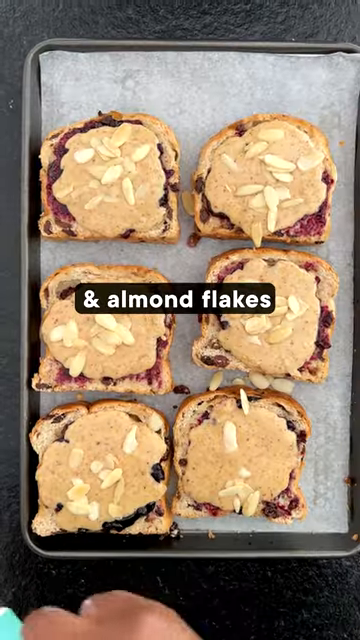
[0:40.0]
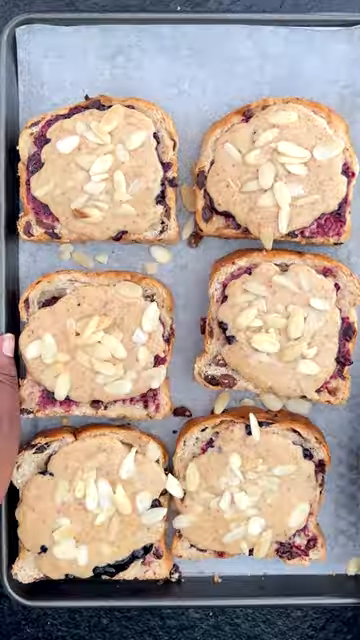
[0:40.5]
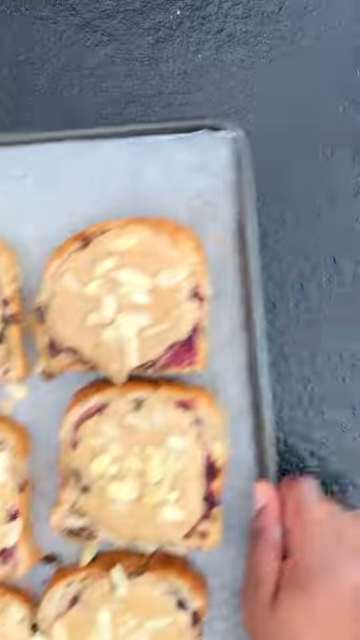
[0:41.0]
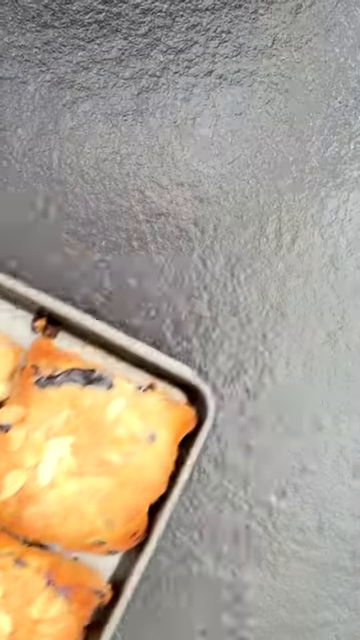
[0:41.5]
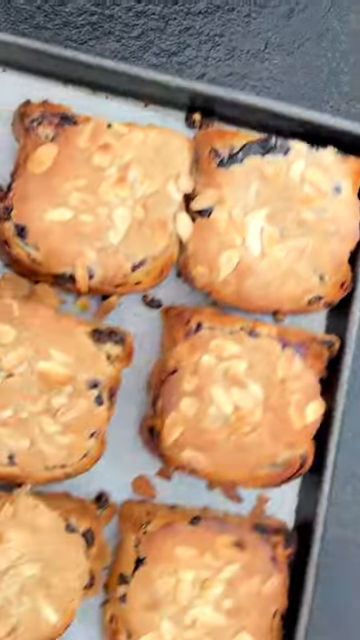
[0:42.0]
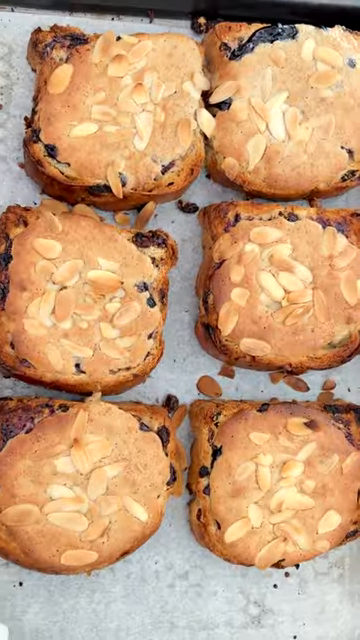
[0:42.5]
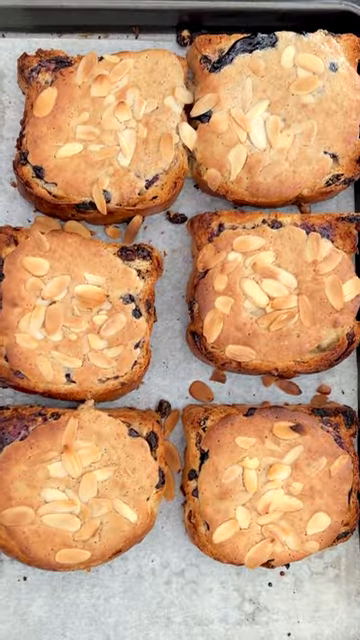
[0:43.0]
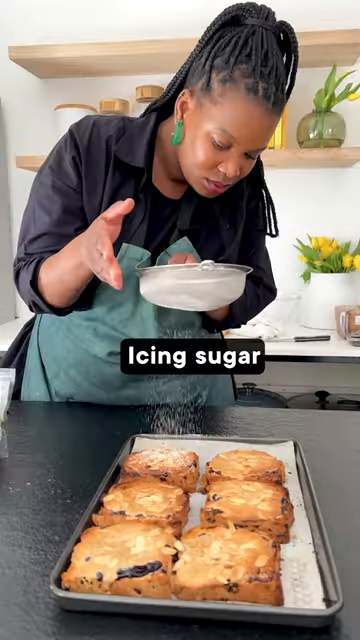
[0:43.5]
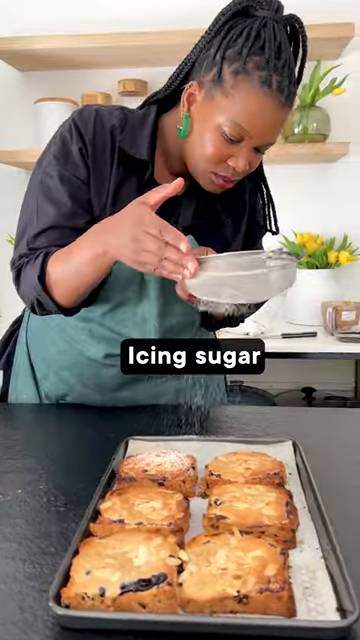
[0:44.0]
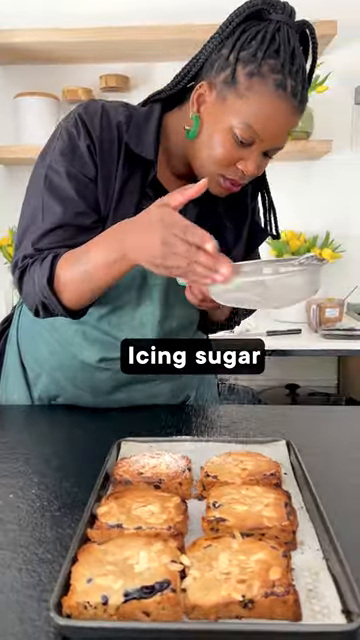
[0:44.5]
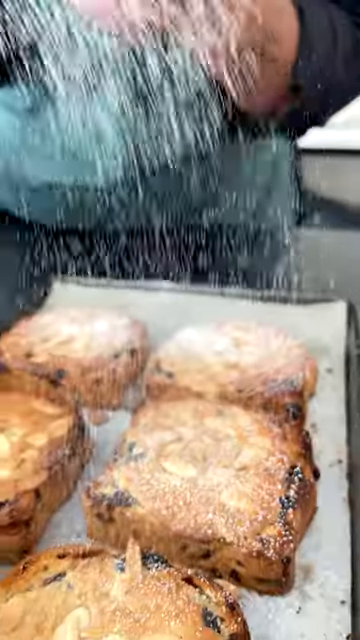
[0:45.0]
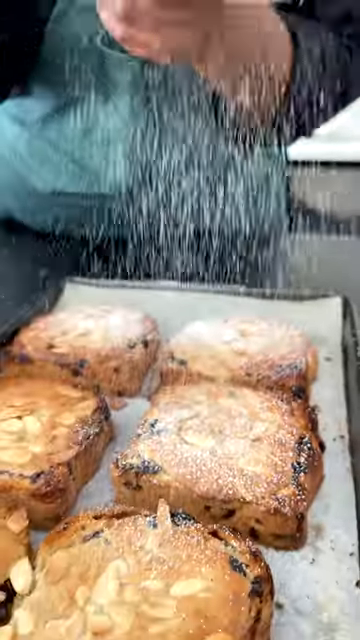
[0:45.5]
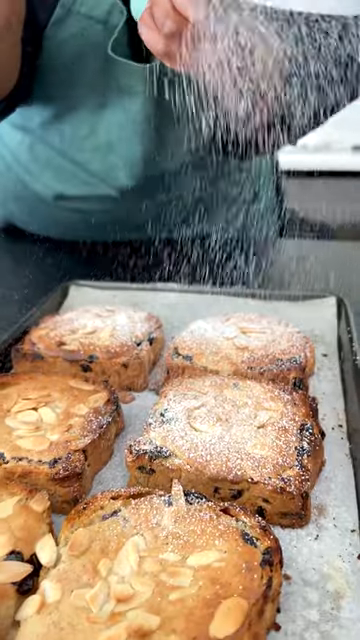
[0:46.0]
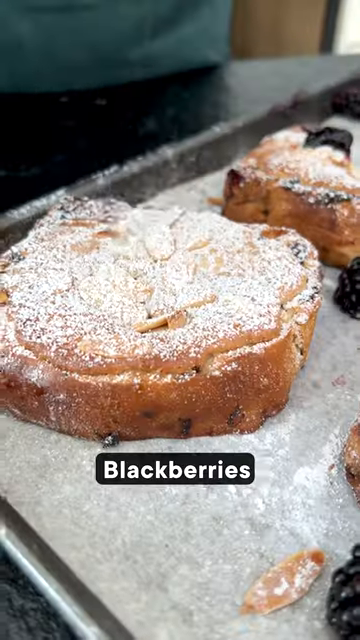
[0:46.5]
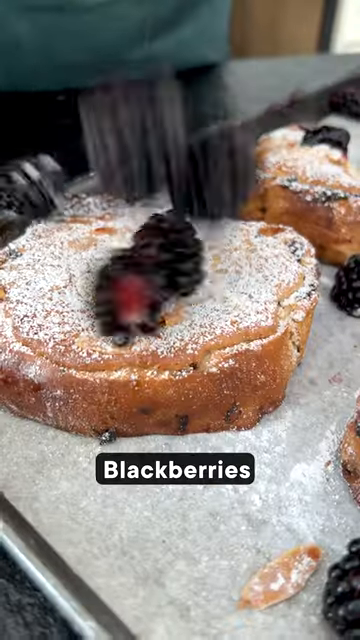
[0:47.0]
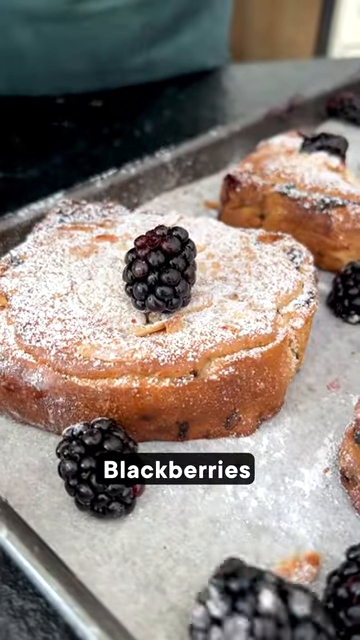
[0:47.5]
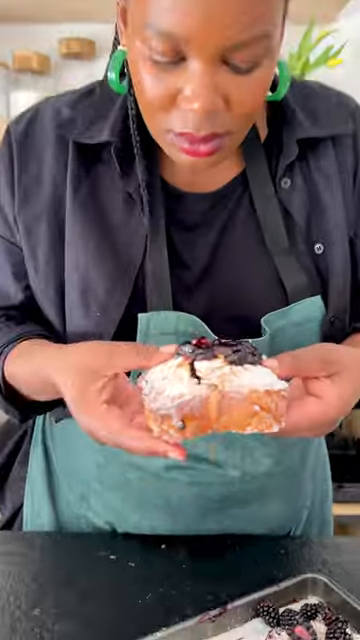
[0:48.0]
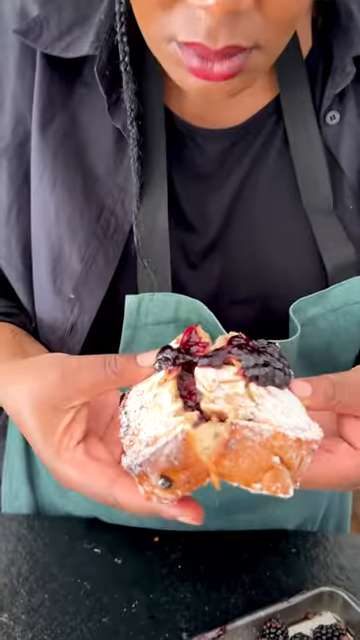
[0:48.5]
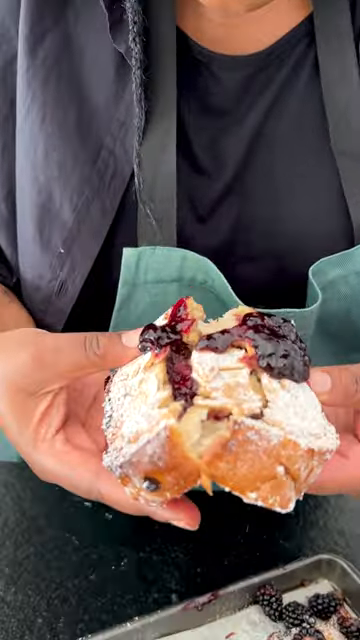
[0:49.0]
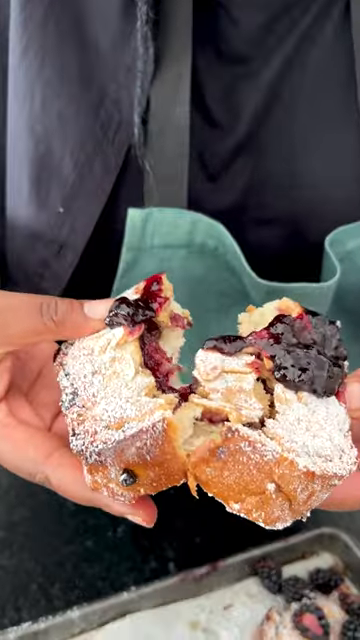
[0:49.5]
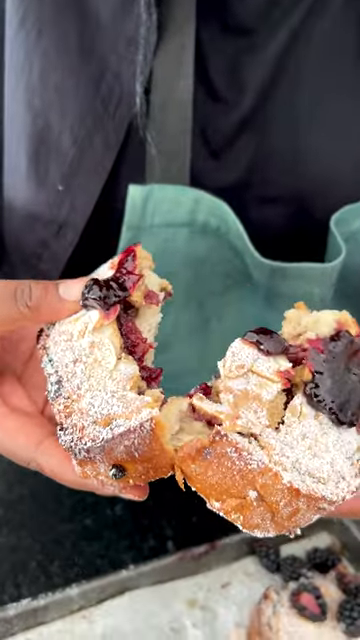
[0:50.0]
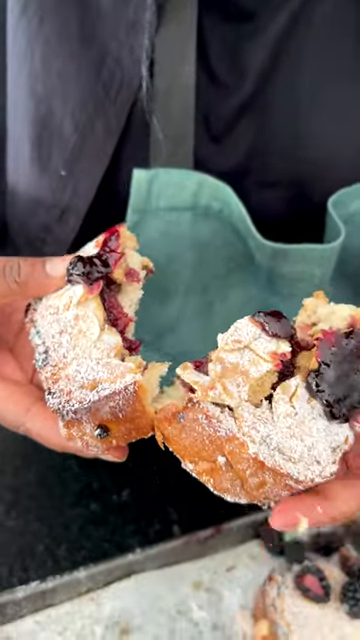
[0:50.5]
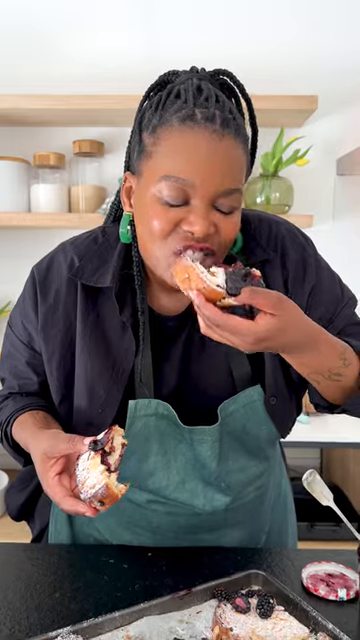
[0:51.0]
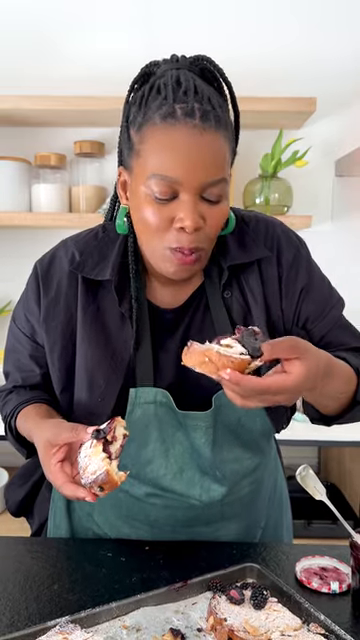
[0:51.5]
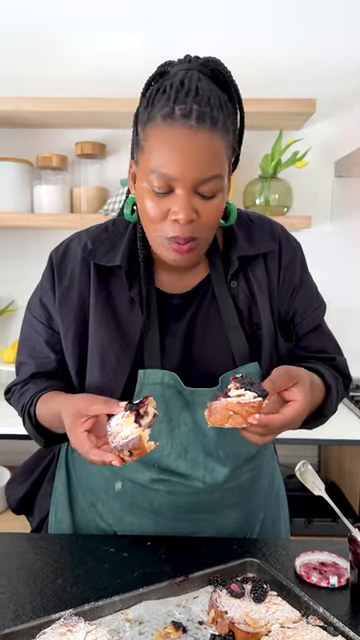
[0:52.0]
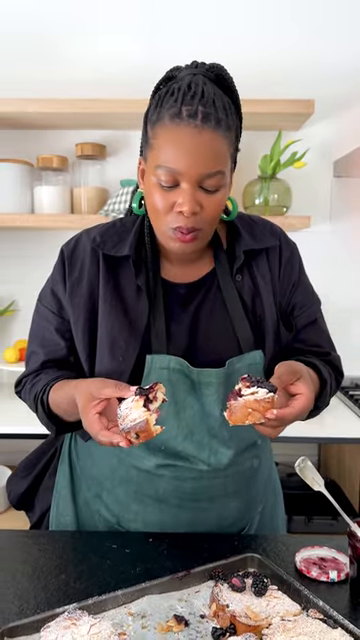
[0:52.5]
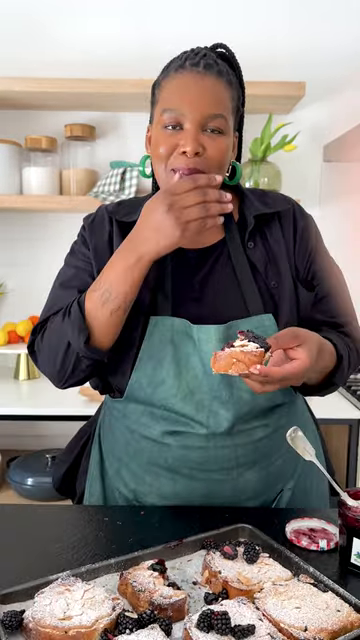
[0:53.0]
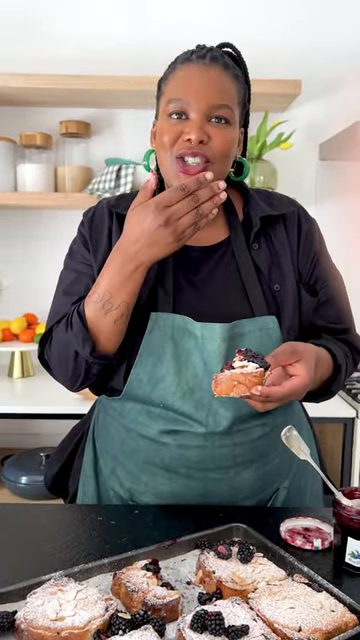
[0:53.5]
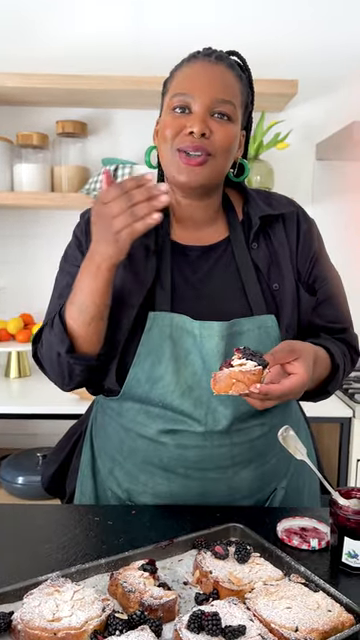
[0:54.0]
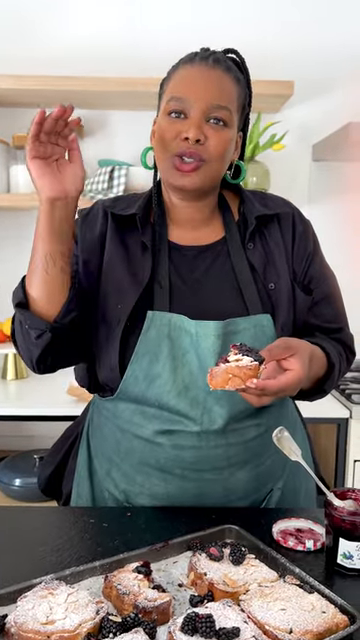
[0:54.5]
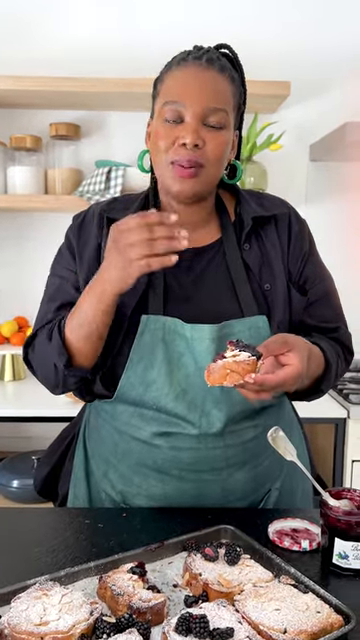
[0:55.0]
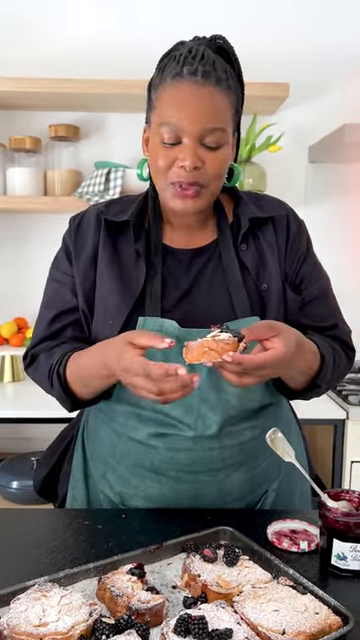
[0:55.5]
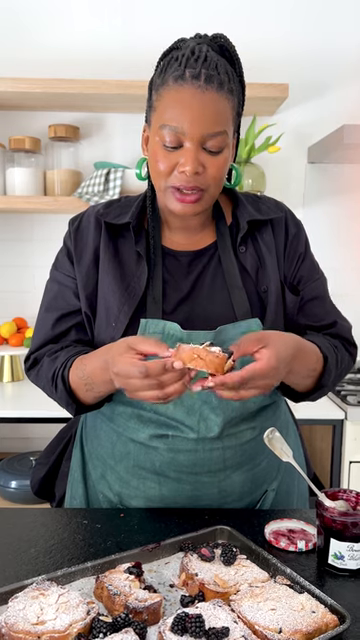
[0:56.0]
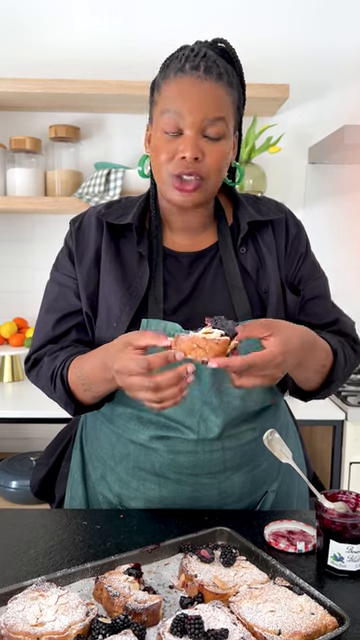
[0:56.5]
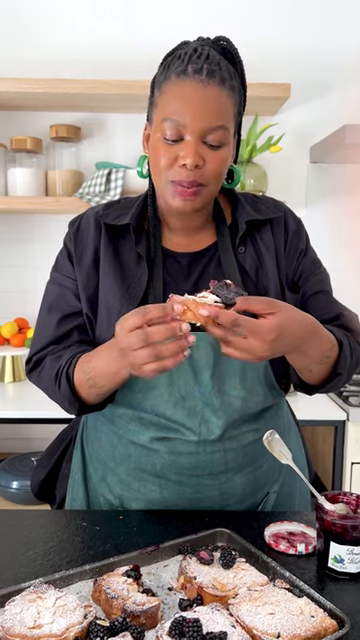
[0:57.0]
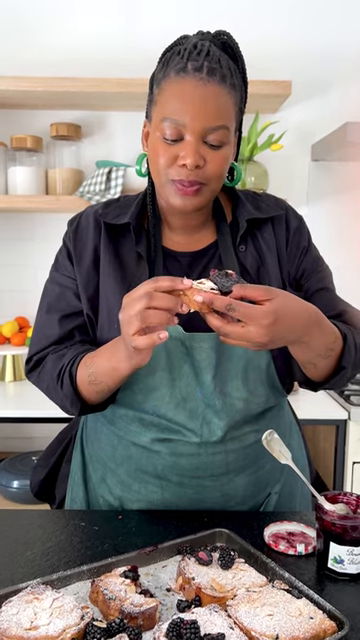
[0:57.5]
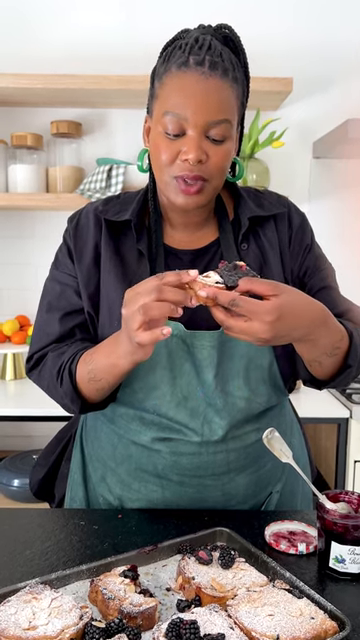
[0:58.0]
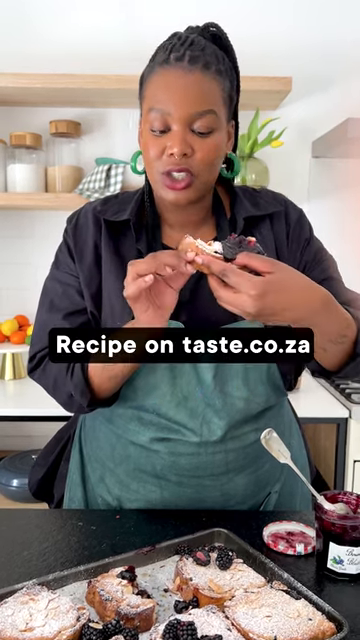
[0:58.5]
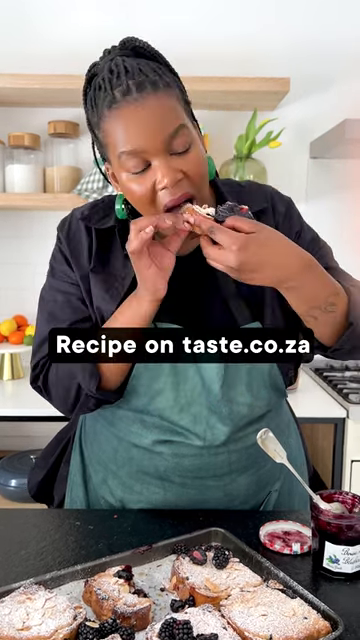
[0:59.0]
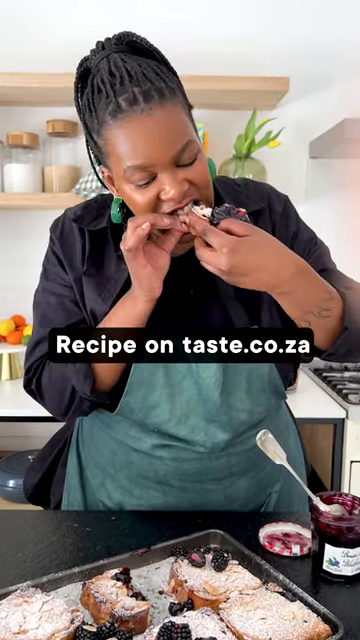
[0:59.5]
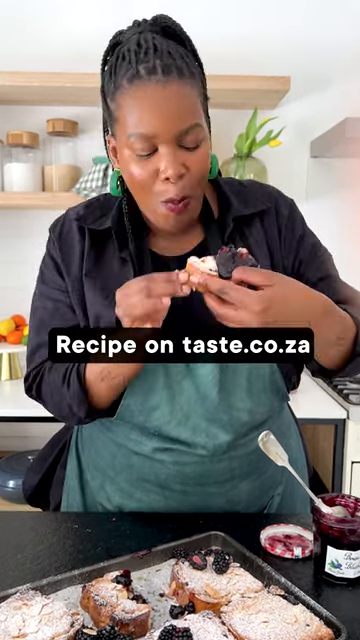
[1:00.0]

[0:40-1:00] The title "almond flakes" appears in white lettering on a black rectangular background. The video quickly cuts to her grabbing the pan and apparently putting it in the oven, then shows her quickly taking the pan back from the left side and putting it down on the table; it looks like it has already been cooked, like a quick time-lapse. She puts icing sugar in a sifter and moves it across the top of the cooked raisin bread, with the title "icing sugar" in white lettering on a black rectangular background, followed by a more zoomed-in view of her putting the powder on top. She then throws blackberries on top of the bread, with the title "blackberries" in white lettering on a black background. In the next scene she pulls the bread apart and eats it, talking about it while eating and putting her hand over her mouth as she speaks. Finally, a title in all white lettering reads "recipe on taste.co.za".